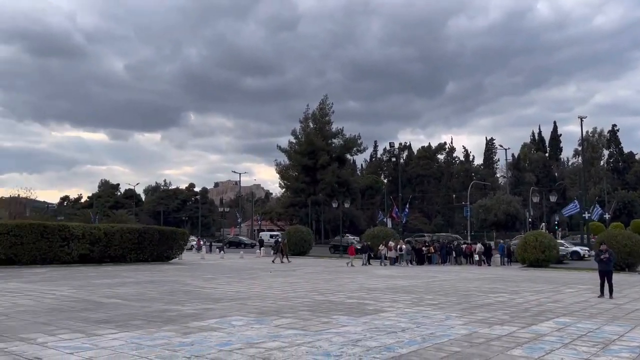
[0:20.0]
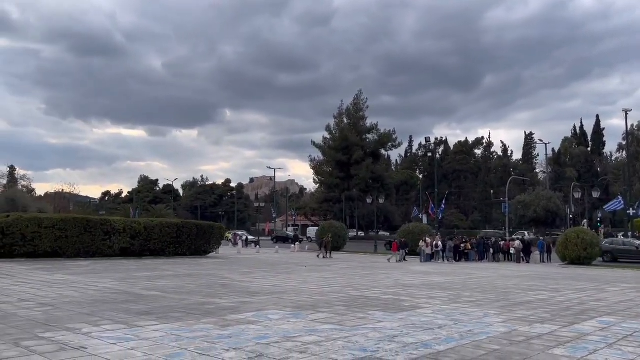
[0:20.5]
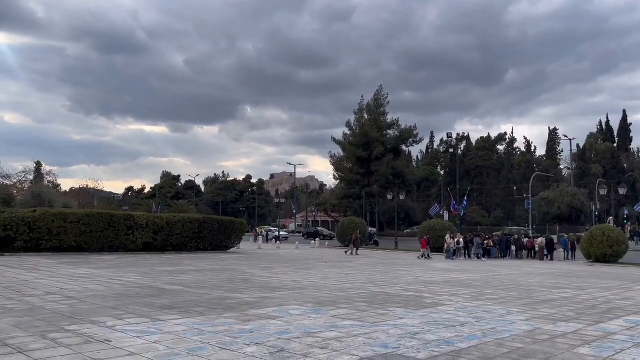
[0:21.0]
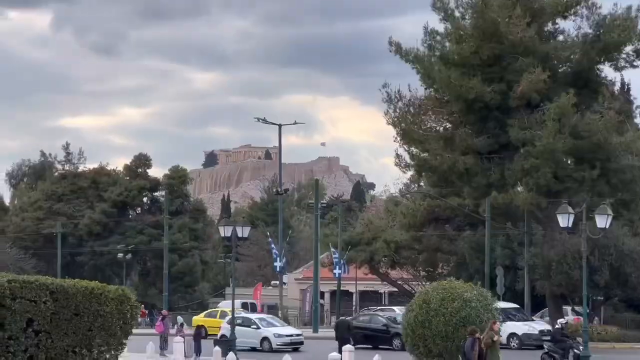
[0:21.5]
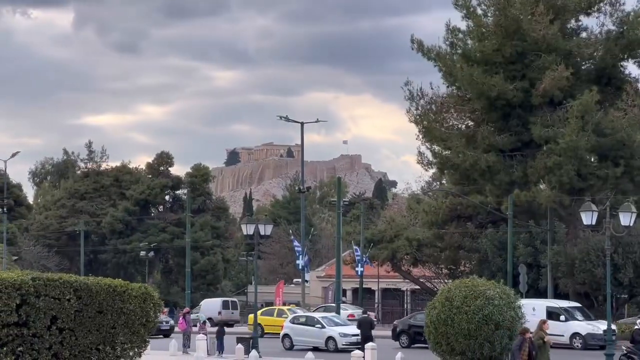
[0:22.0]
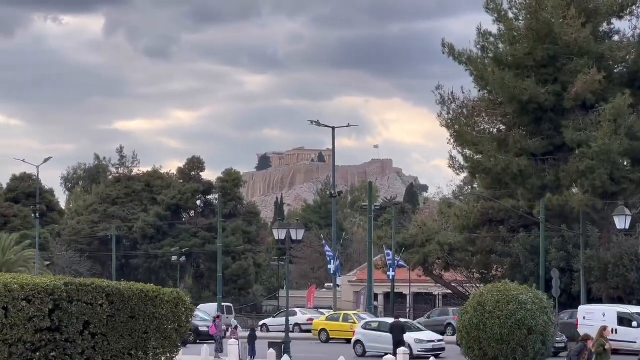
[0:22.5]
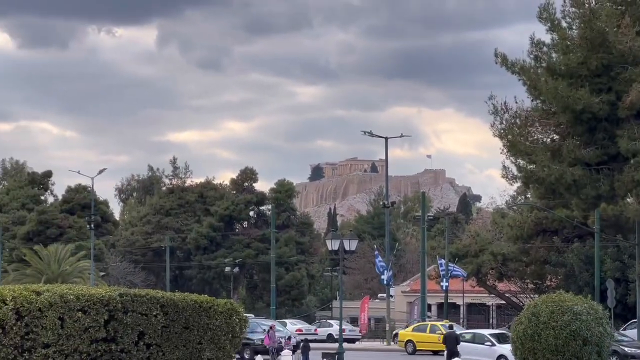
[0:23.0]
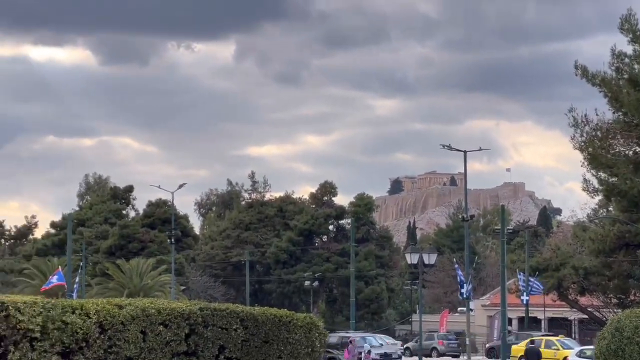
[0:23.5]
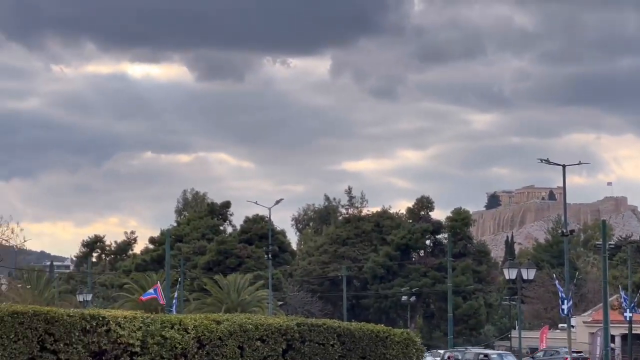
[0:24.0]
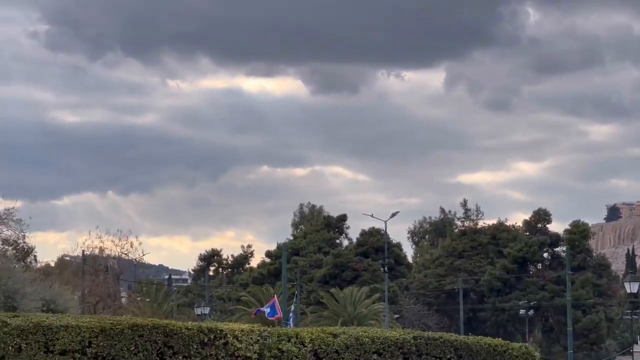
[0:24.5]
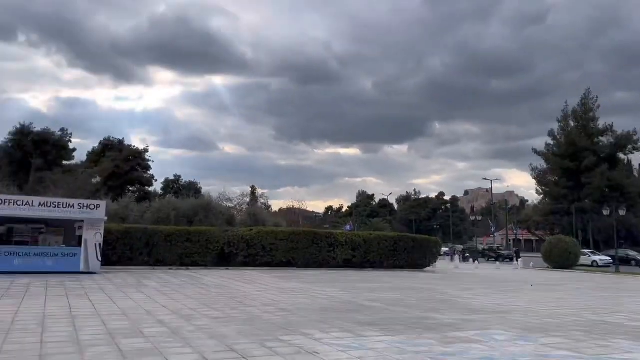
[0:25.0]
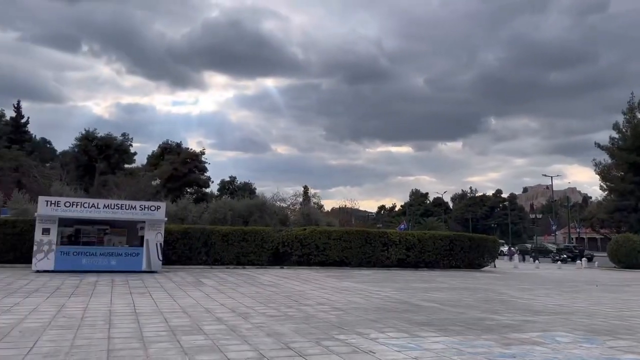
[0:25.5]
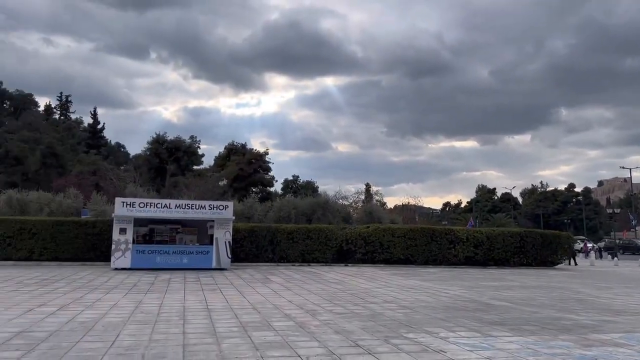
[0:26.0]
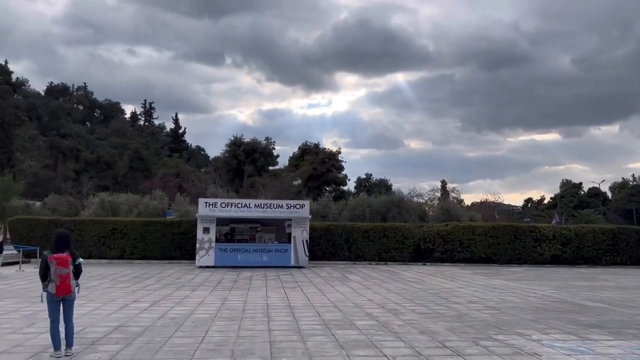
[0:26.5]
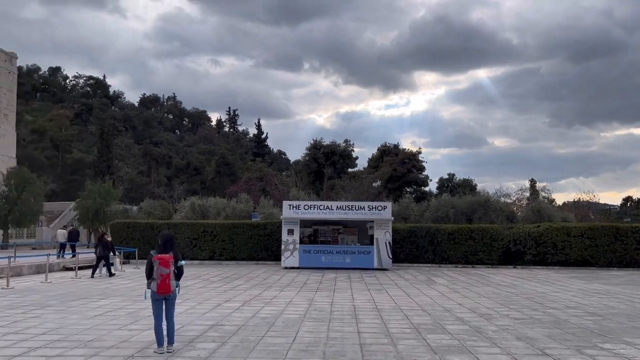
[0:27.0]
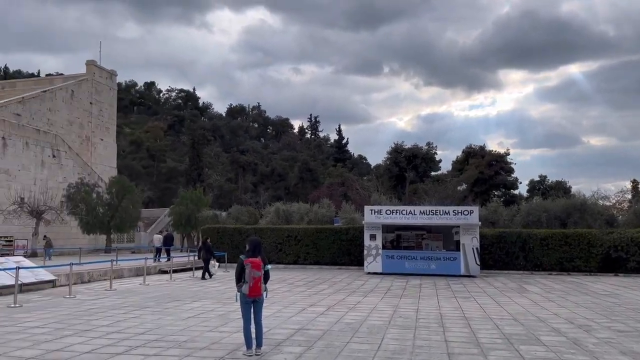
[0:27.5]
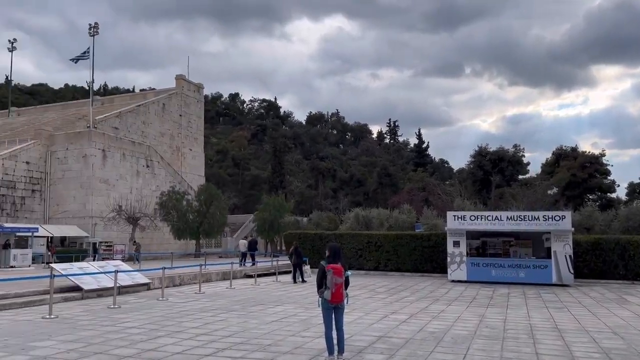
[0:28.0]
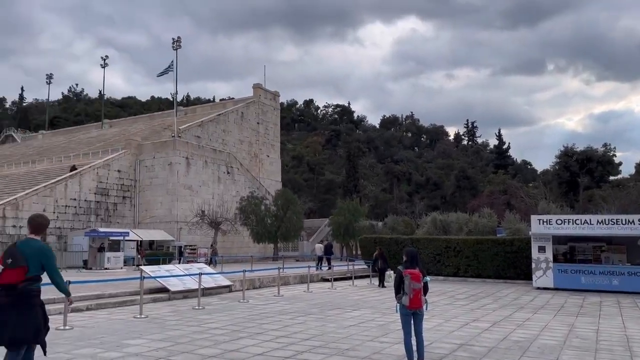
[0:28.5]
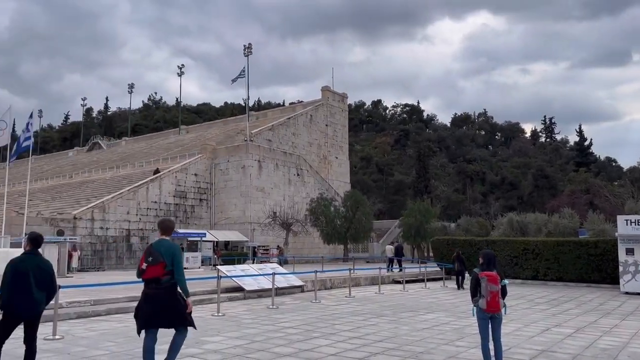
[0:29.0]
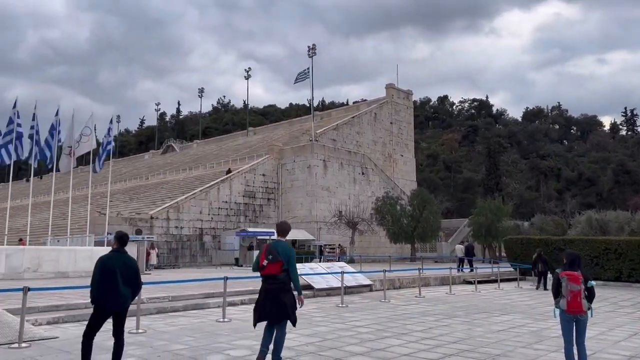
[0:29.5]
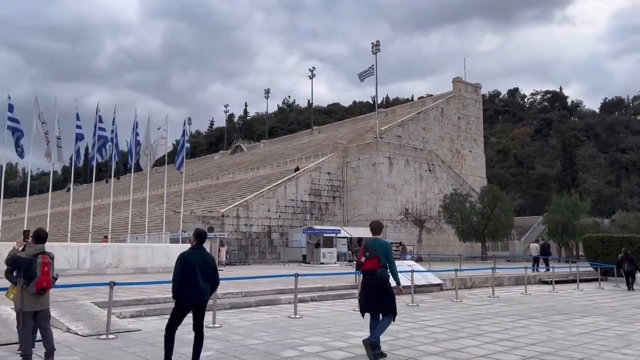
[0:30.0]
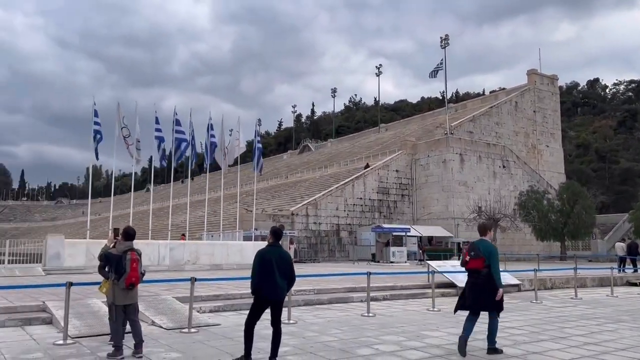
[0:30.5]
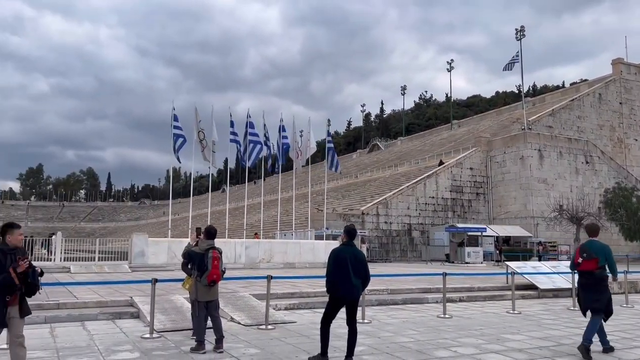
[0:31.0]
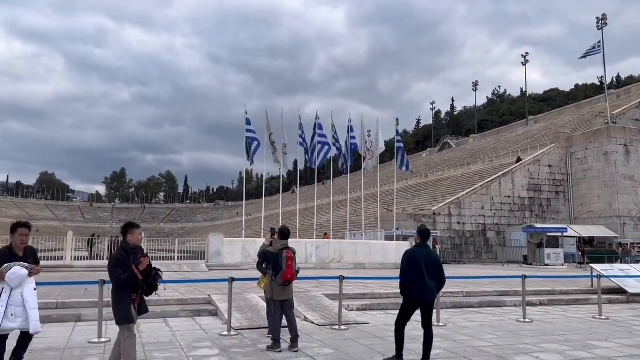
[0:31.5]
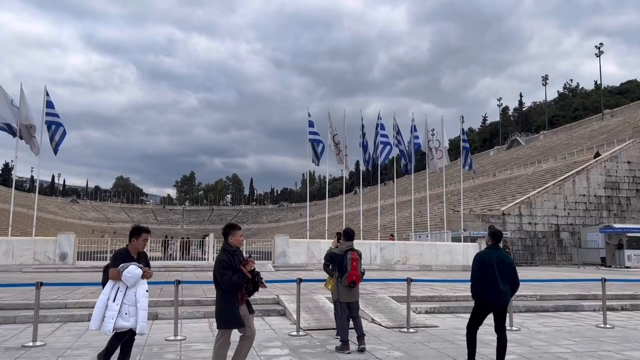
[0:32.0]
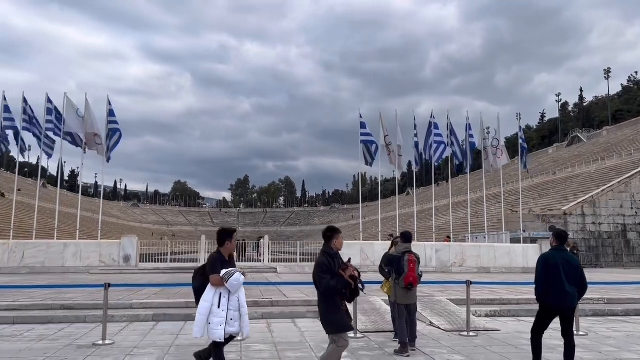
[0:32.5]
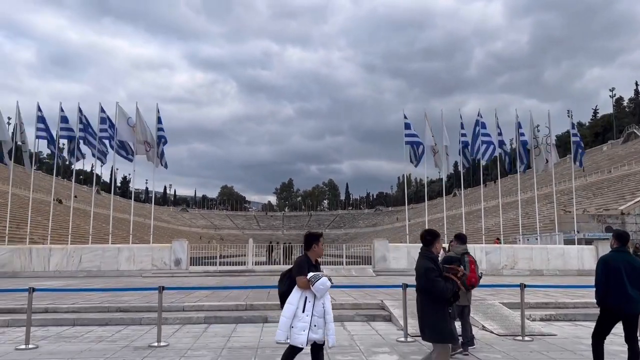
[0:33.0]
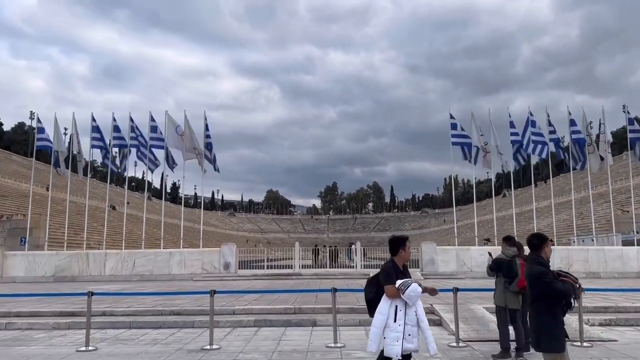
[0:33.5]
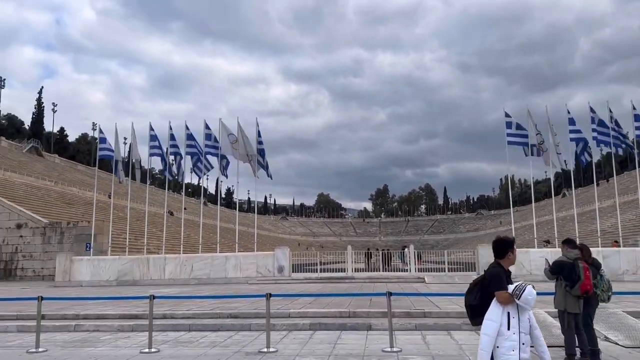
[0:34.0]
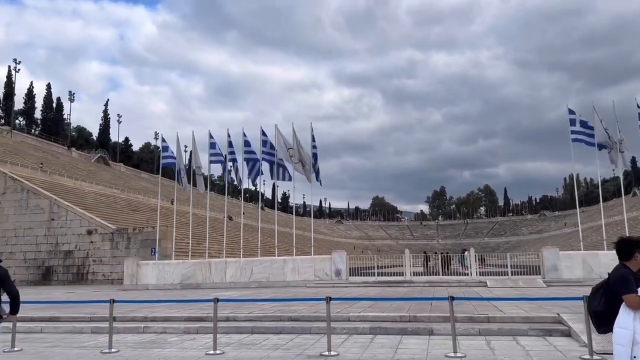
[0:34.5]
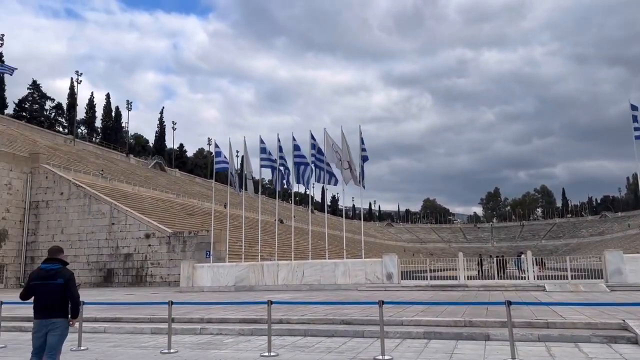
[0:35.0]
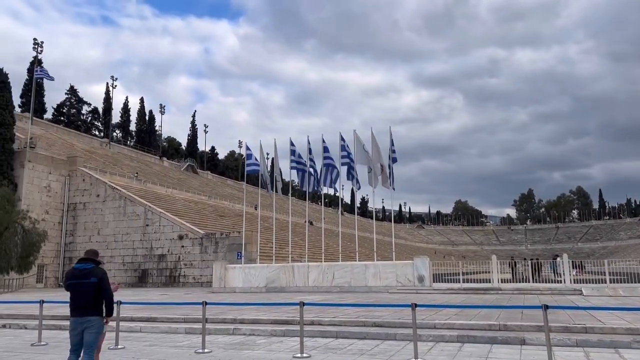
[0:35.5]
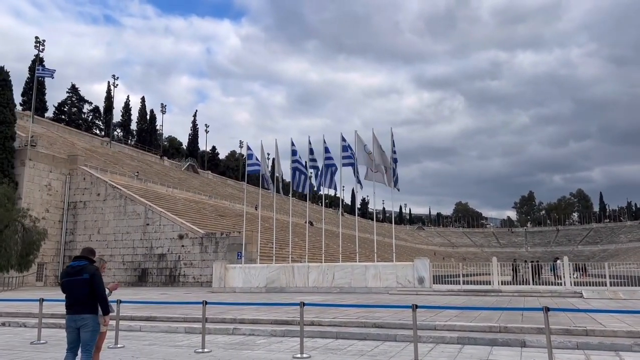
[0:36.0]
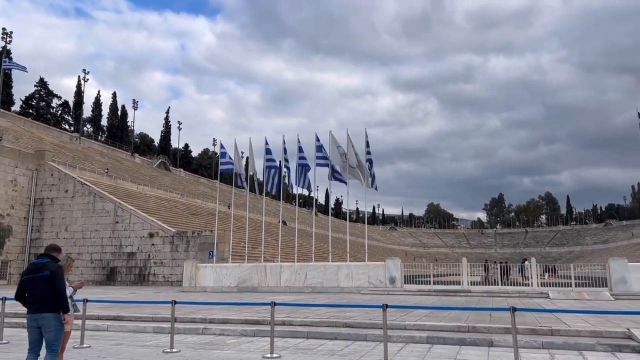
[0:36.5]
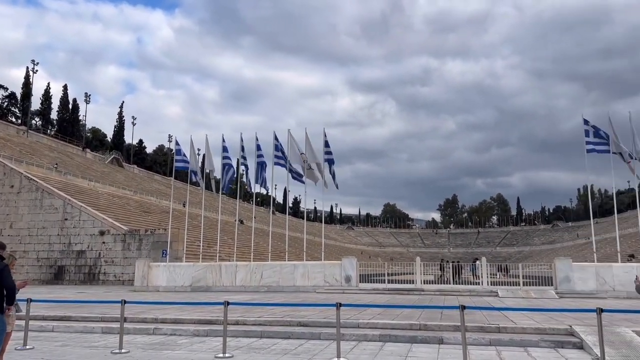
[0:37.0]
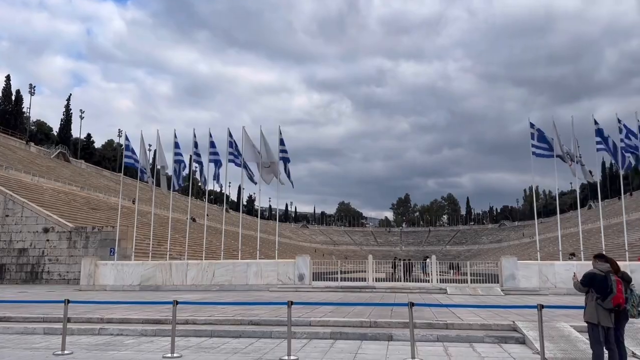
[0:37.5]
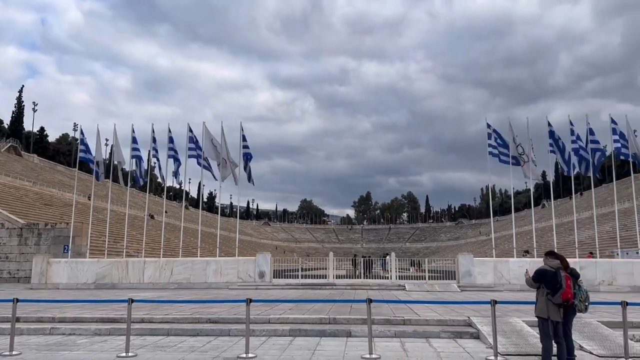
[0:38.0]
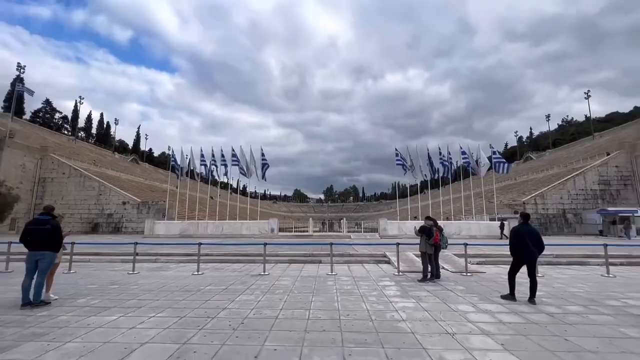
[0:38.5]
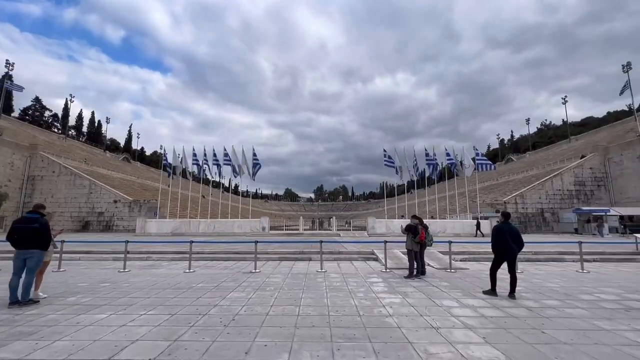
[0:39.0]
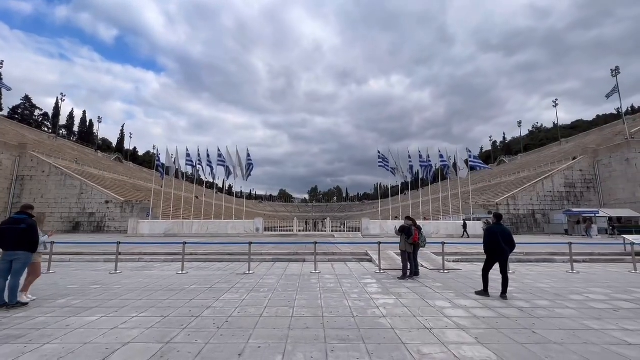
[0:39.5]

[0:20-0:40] Panning views of the city continue on a very cloudy, fairly dark day. The shots move from the cityscape to some of the cloudy sky and then to an amphitheater, a half seating area of stone steps in a semicircle, mostly unoccupied, with a few tourists milling about. Eight traditional blue and white Greek flags stand upright on either side of the amphitheater, coming out of a small cement wall, and there is a fence between the two cement-walled areas. It appears to be a tourist area.